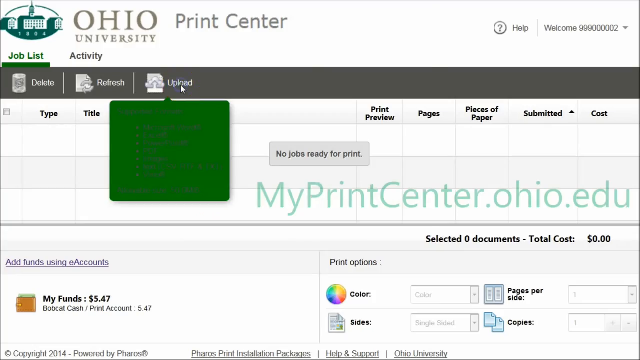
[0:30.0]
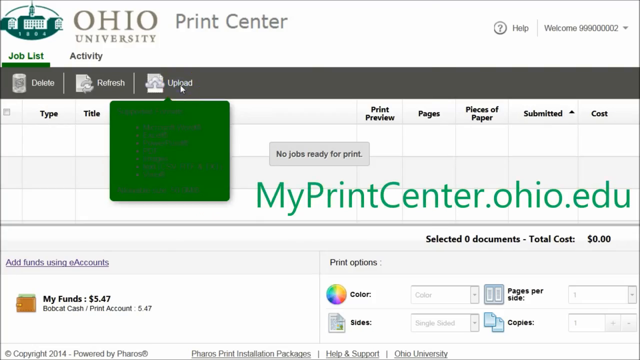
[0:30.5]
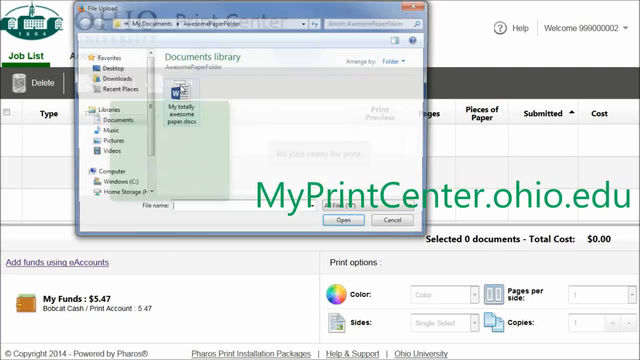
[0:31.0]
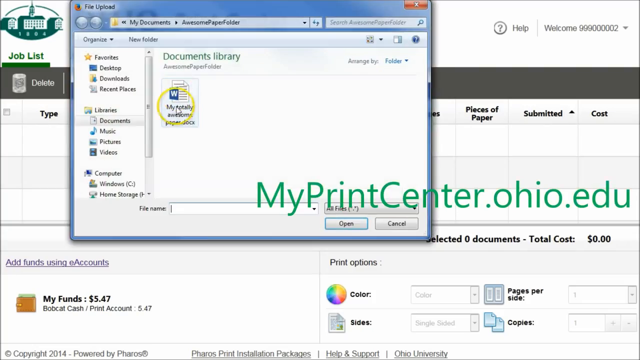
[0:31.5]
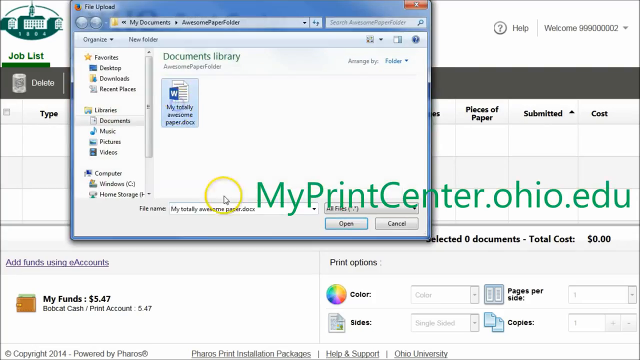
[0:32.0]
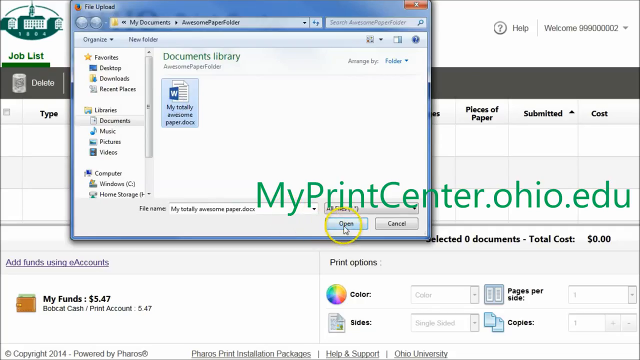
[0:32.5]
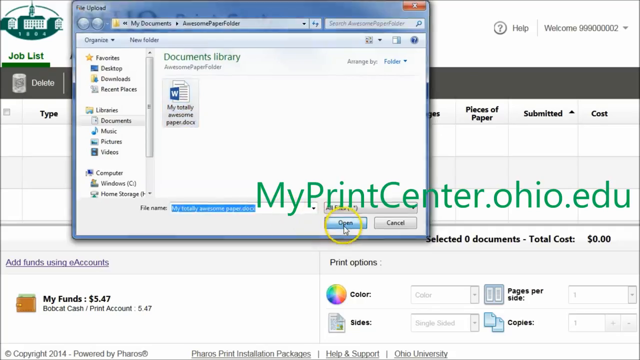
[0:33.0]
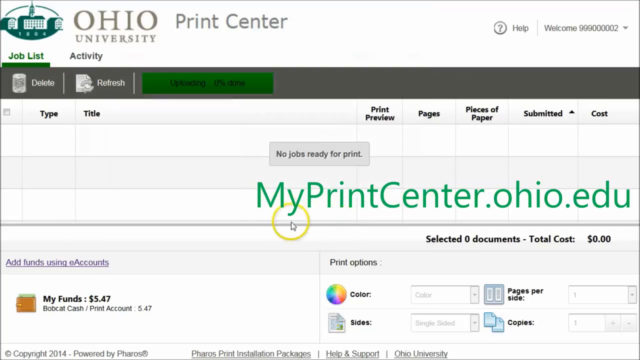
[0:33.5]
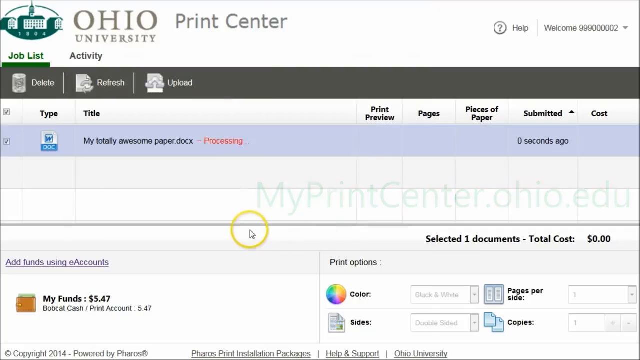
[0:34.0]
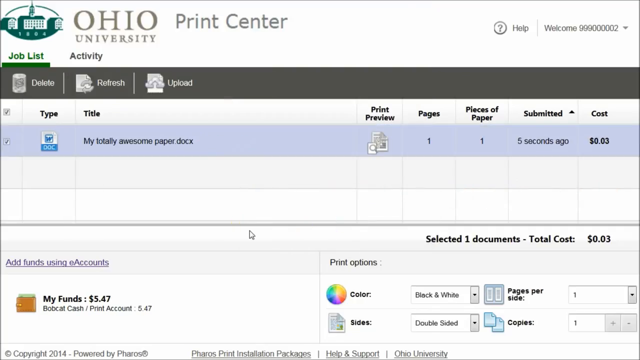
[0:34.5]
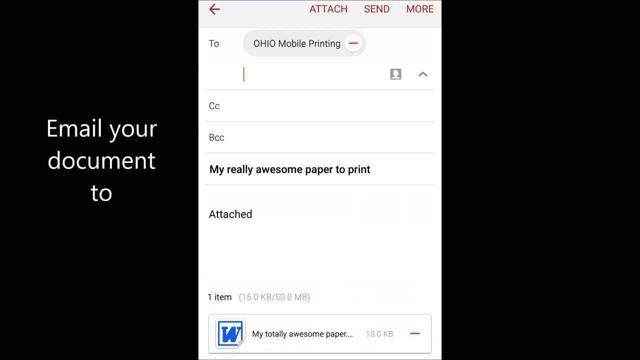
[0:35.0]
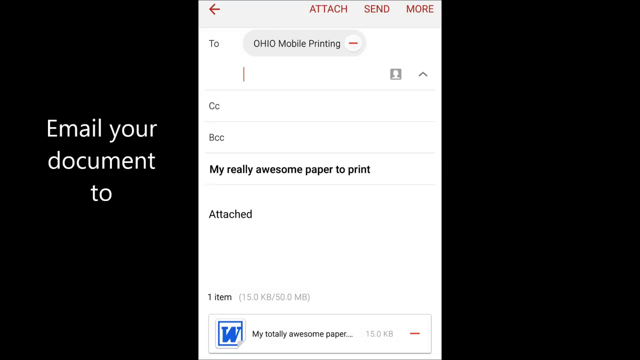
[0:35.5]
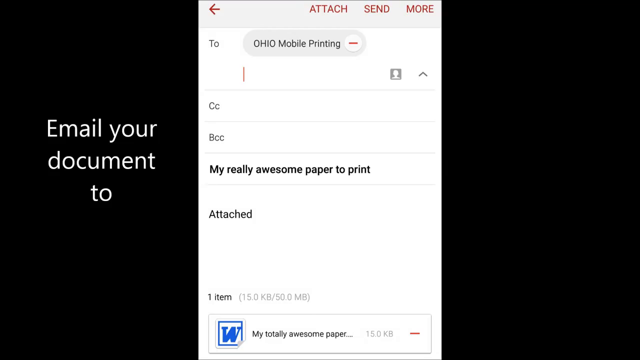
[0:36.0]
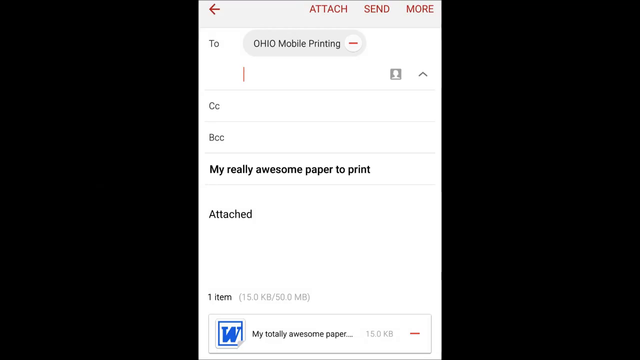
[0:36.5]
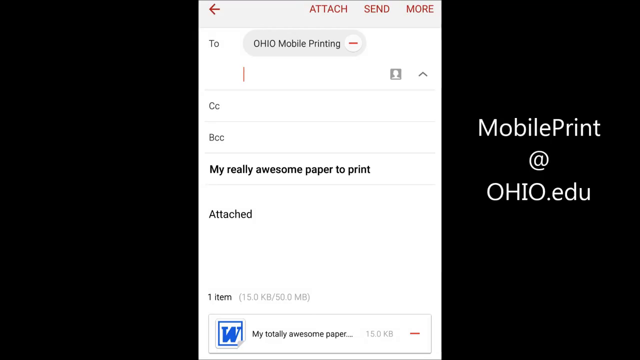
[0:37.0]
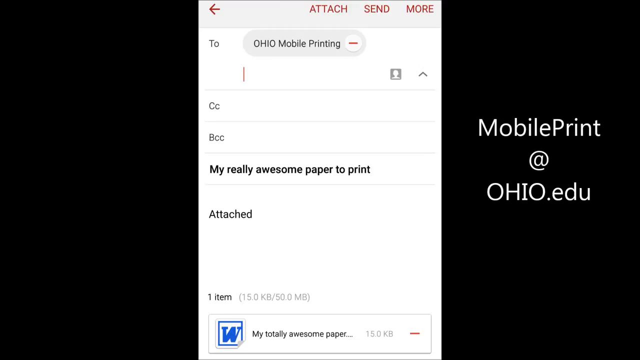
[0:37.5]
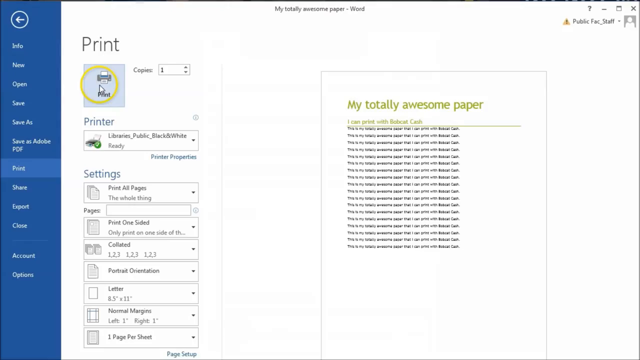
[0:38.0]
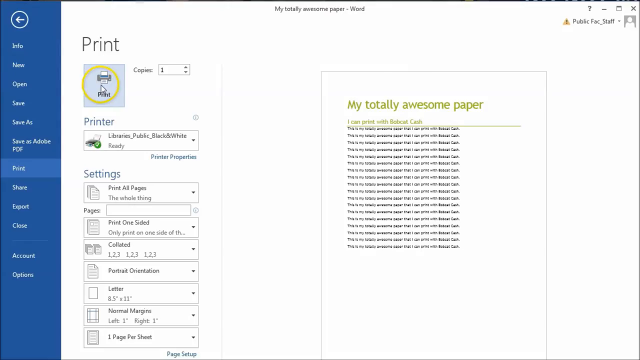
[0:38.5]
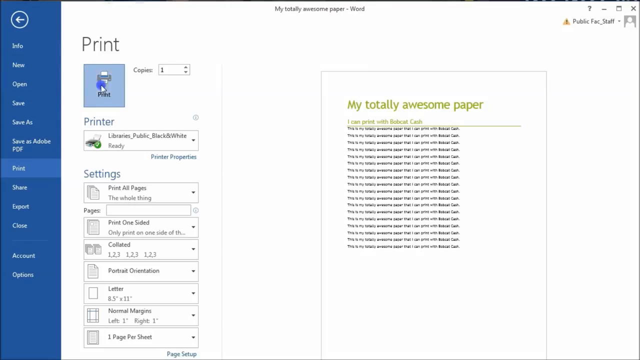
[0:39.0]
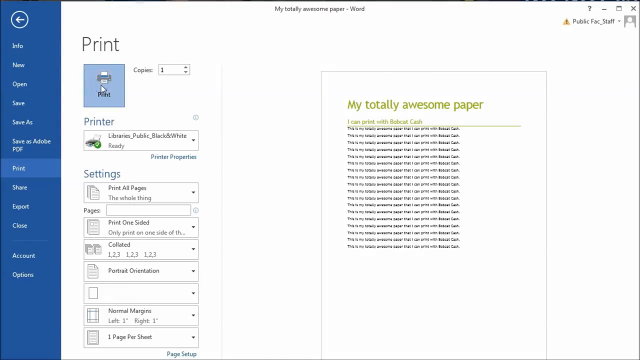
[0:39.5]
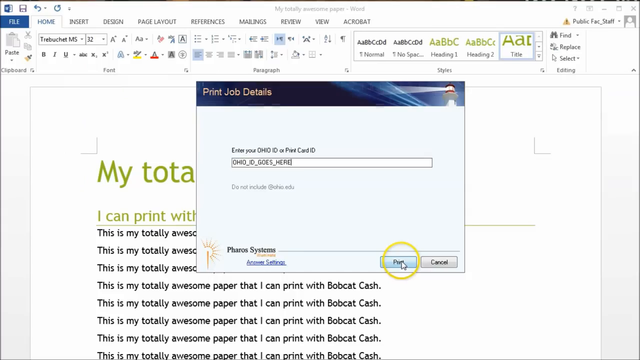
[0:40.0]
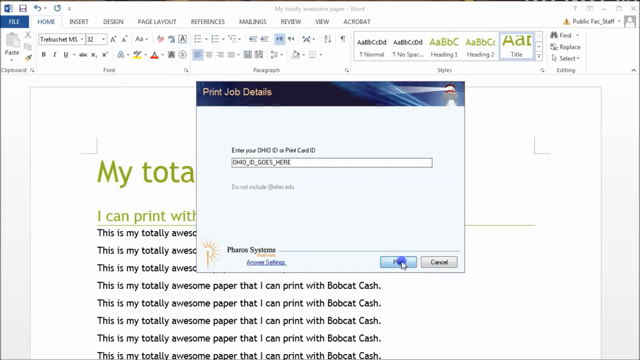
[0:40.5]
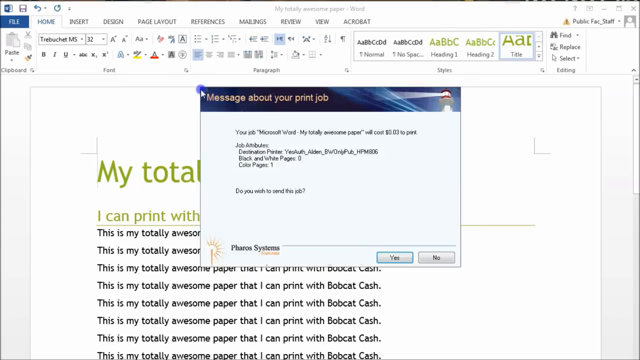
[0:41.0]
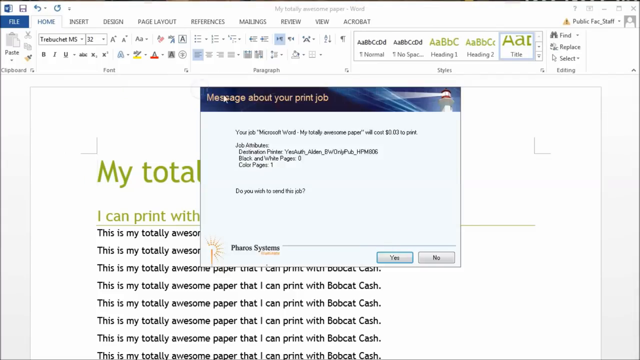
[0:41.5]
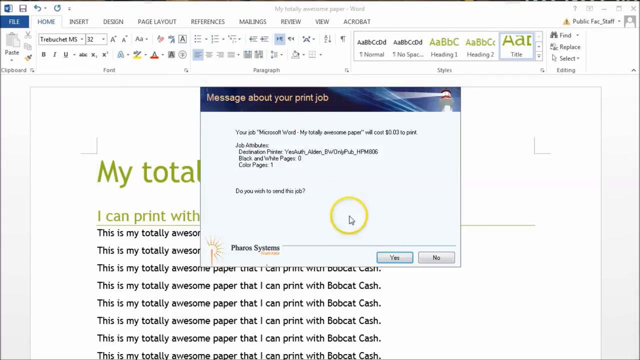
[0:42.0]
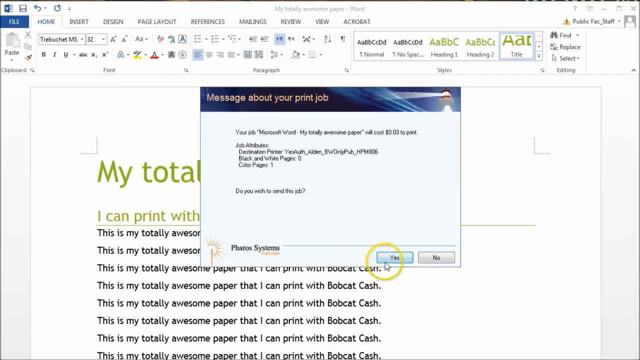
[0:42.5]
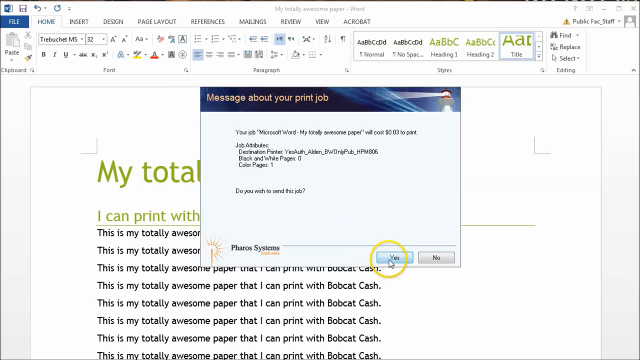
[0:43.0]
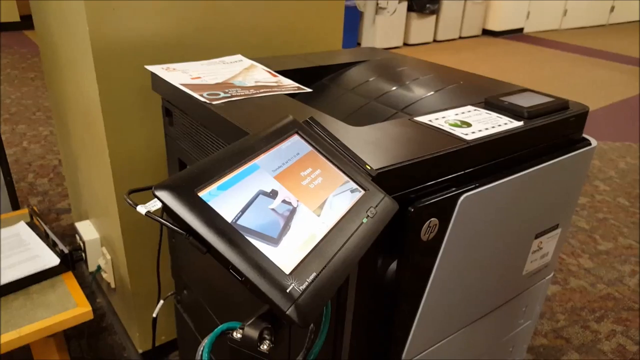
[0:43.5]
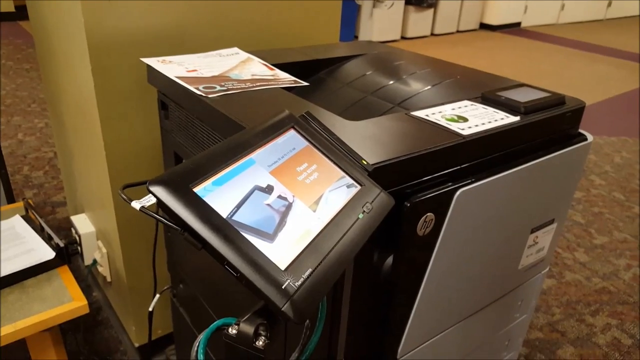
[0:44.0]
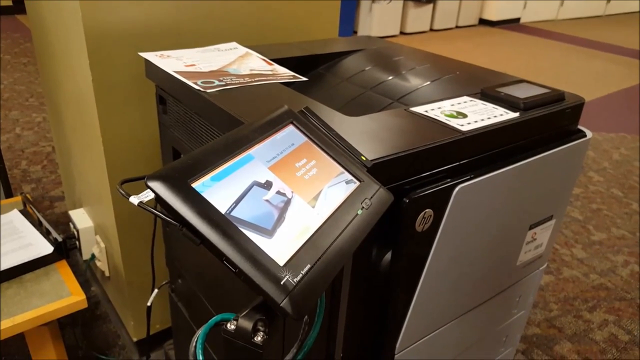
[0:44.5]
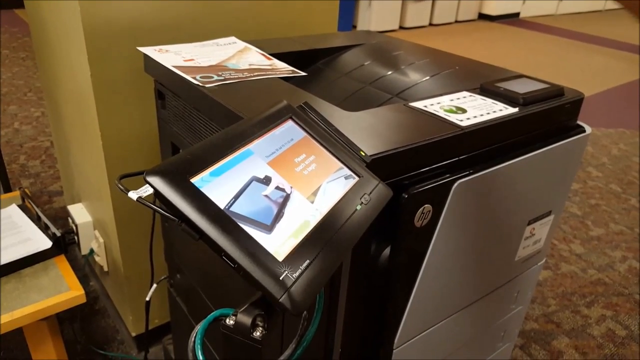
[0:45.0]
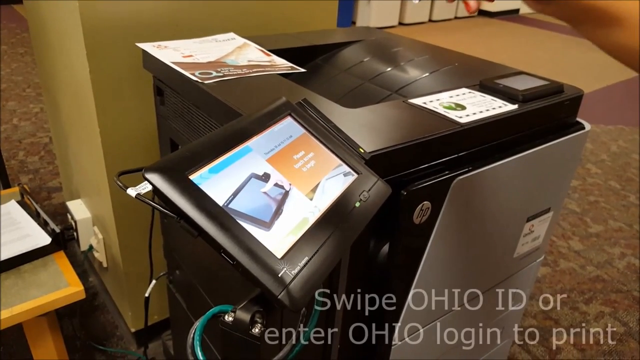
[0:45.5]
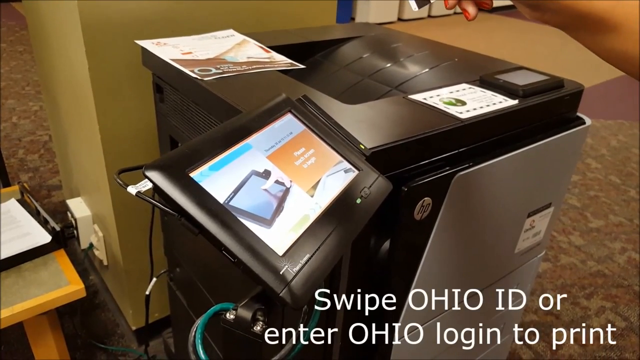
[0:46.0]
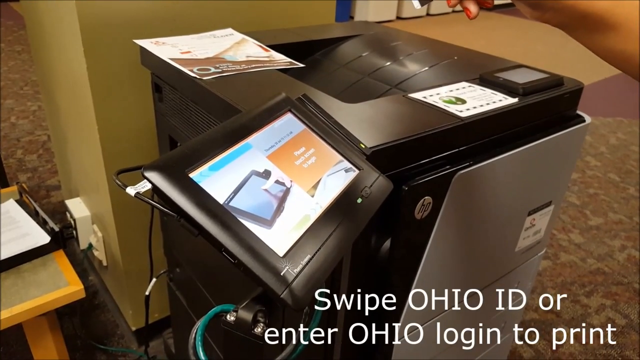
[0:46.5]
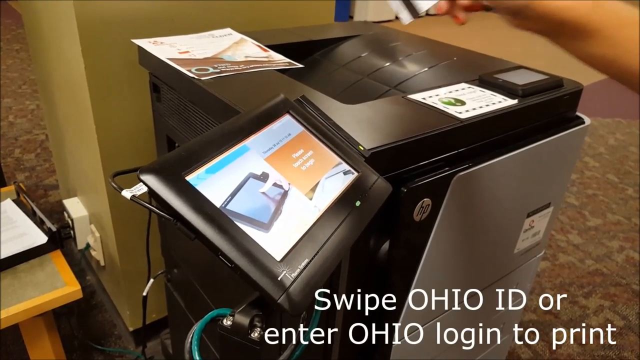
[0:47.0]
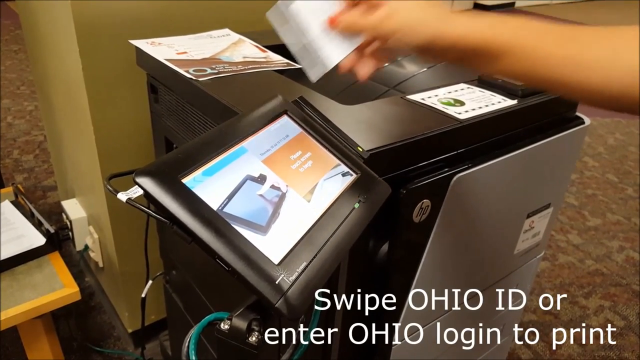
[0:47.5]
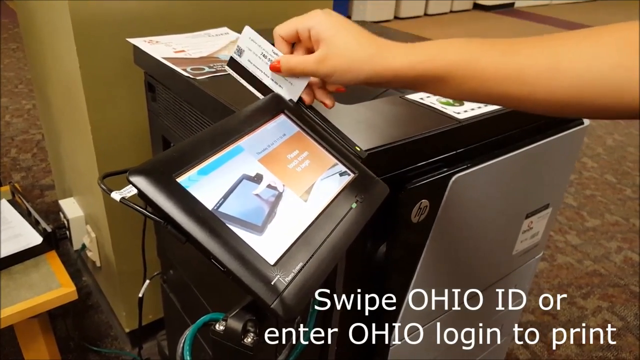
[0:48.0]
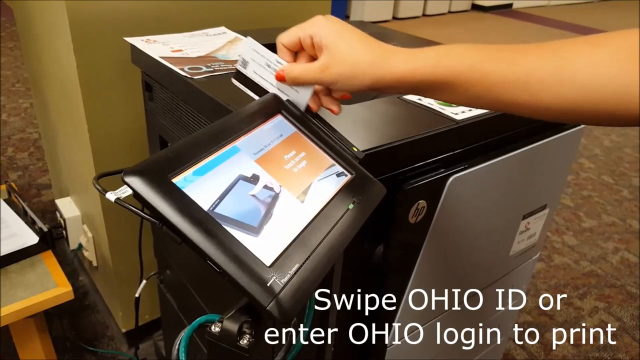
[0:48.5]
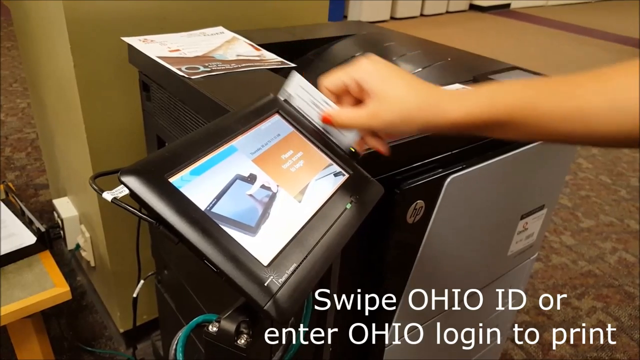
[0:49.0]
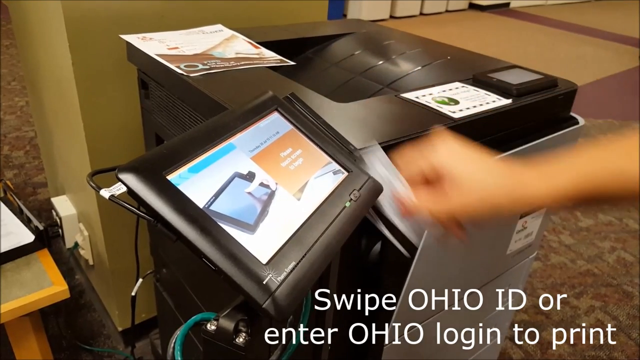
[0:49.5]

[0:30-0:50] The video shows printing out a paper and how the printer works after getting access to the Ohio University Printer Center and the card. It shows paying for or refilling the card, which the printer needs to identify the membership. The funds on the card are indicated, showing how much is left.